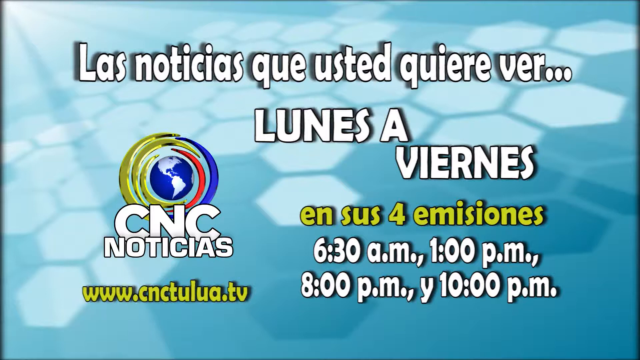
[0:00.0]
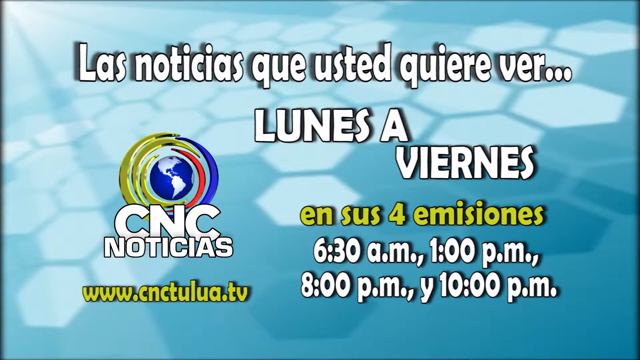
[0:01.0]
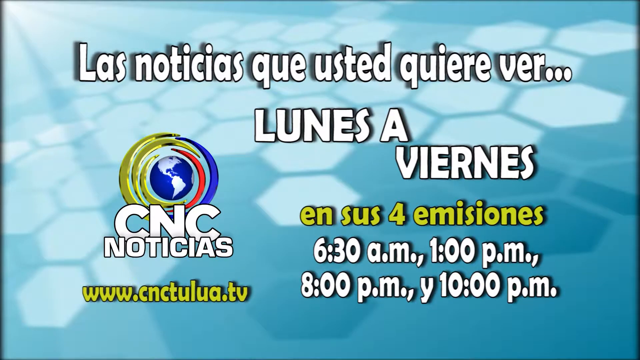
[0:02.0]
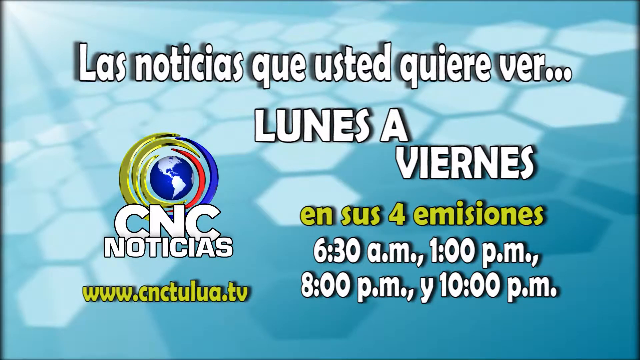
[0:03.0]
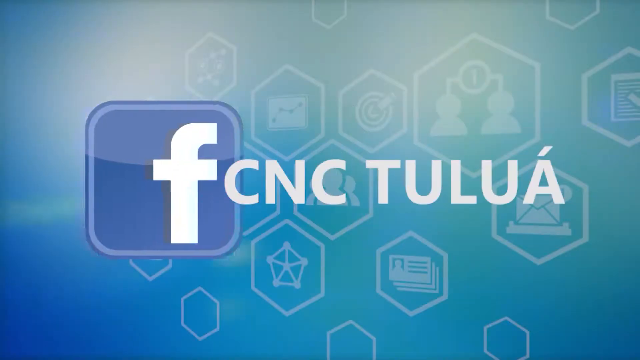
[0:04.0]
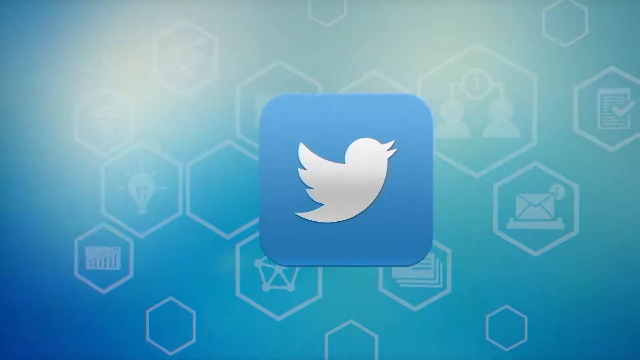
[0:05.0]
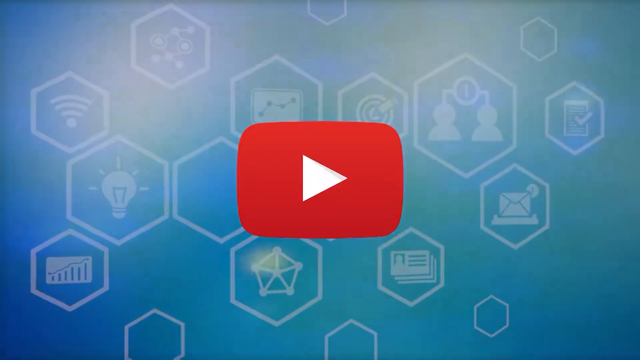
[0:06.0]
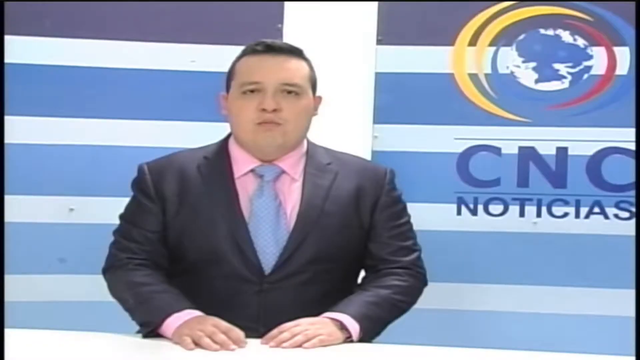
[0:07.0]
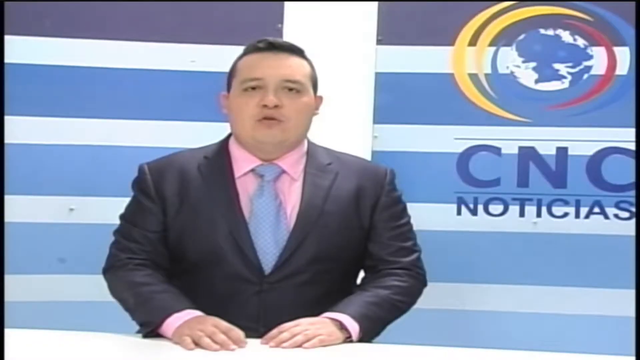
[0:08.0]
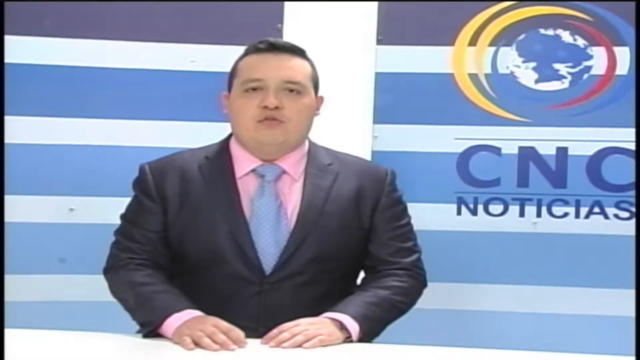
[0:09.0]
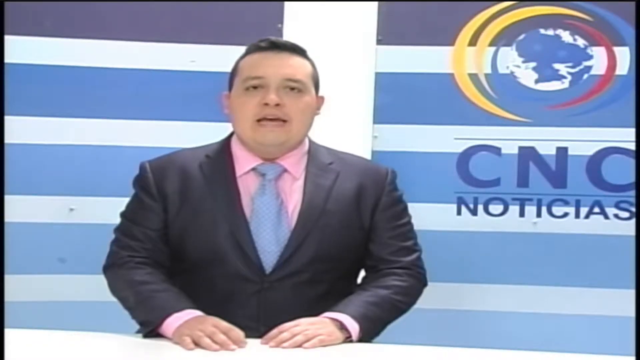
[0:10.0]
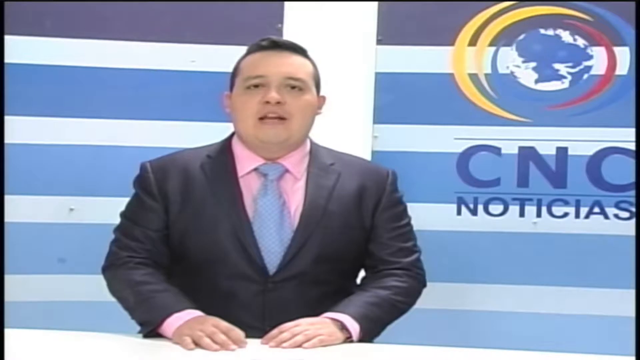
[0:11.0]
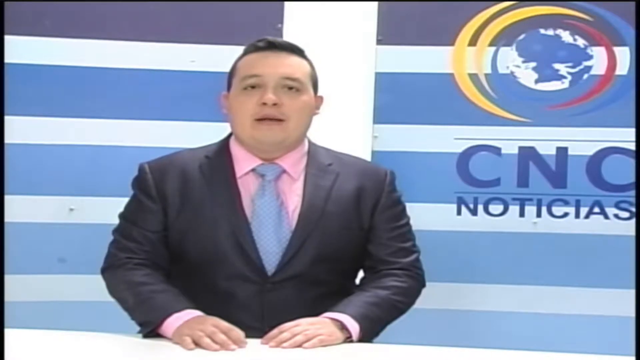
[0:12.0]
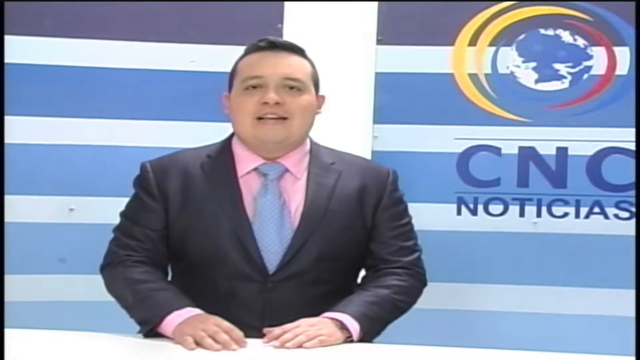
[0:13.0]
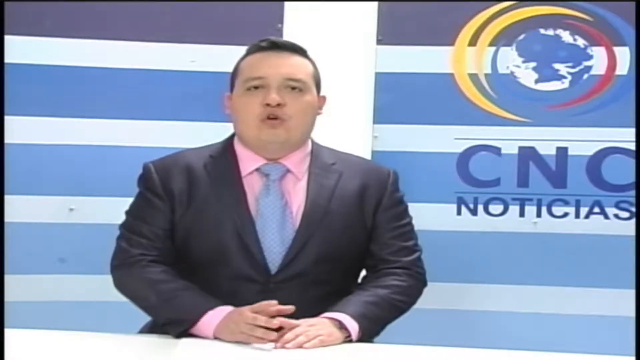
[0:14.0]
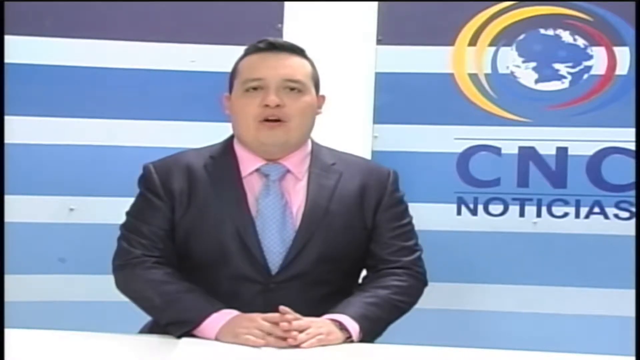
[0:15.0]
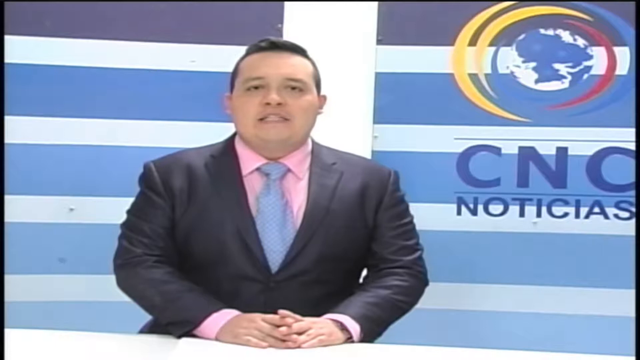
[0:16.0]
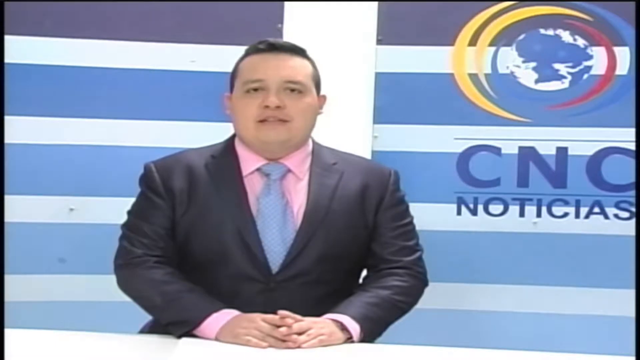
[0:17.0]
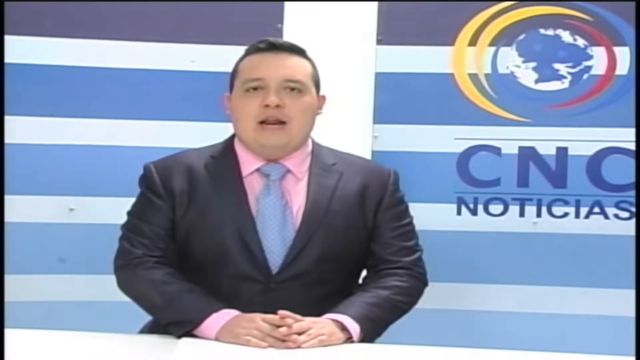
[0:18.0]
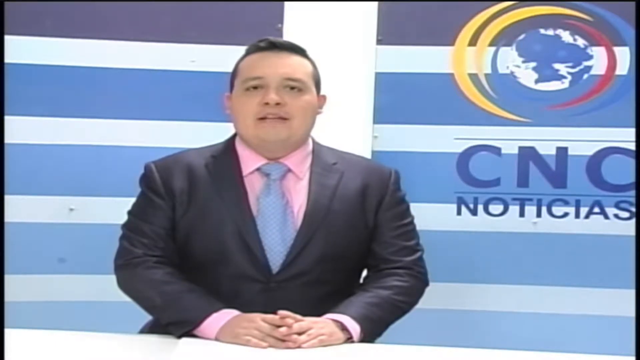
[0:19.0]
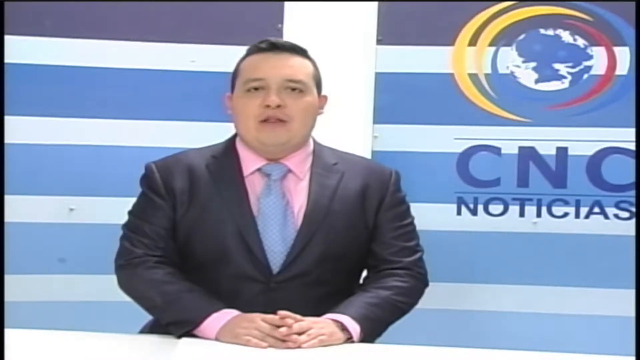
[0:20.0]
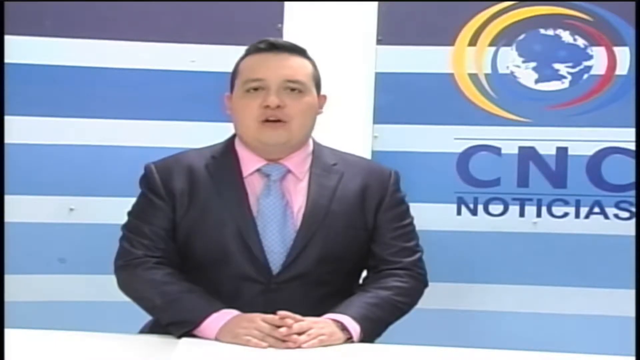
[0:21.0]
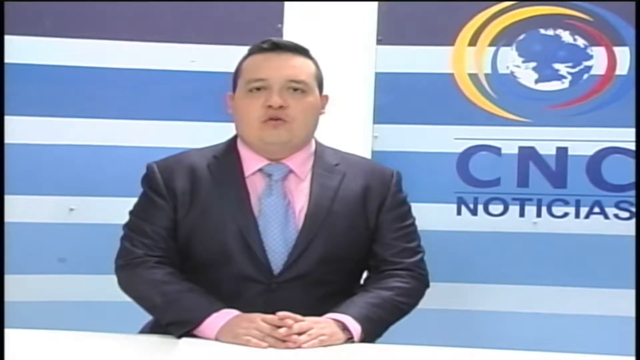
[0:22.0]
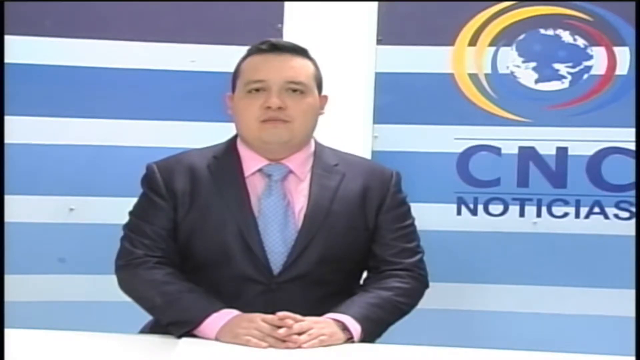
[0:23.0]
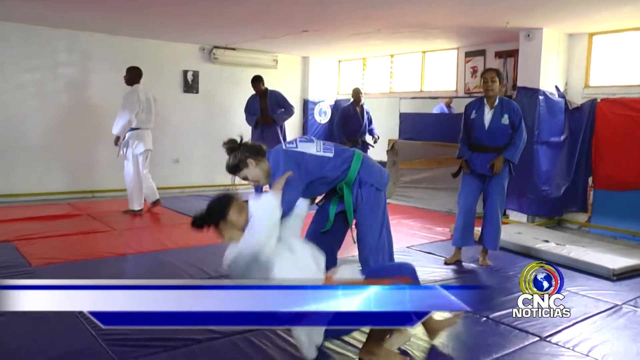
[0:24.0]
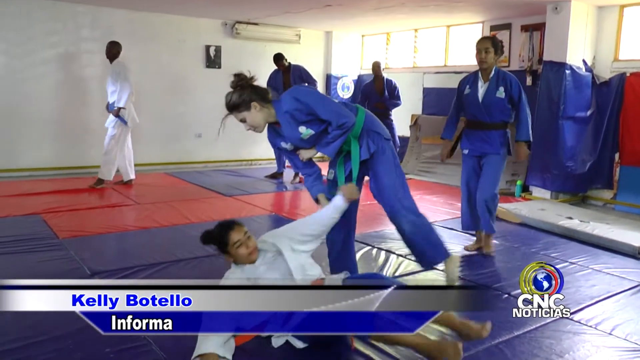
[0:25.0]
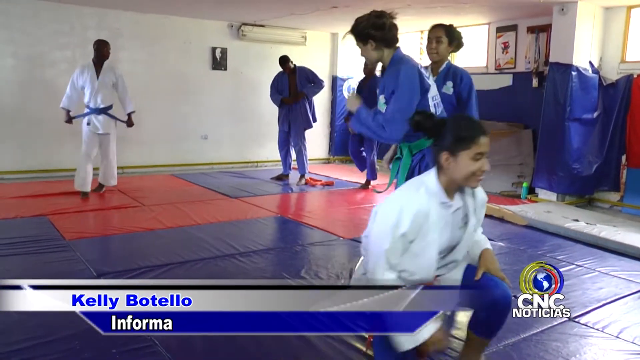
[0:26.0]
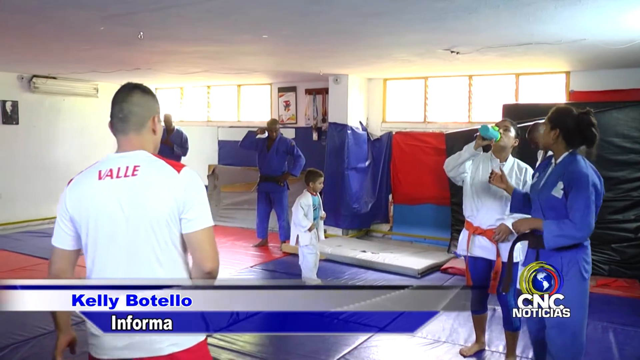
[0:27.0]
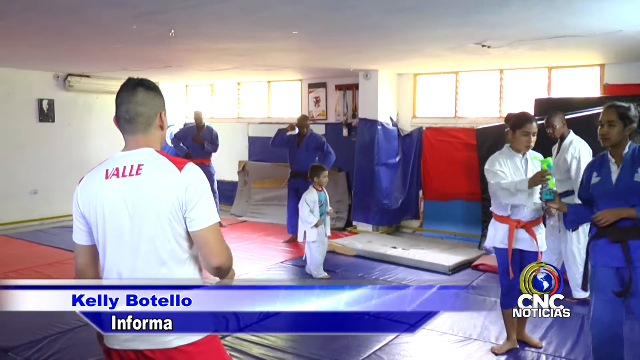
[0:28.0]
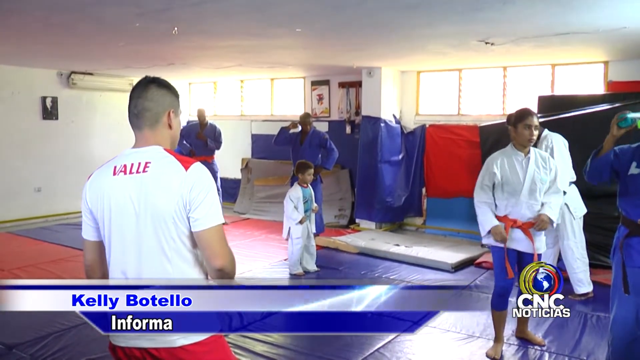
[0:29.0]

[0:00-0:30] A still graphic has a blue and white honeycomb-design background; most of the honeycomb cells are white, while mainly those on the left and right are blue. A CNC Noticias news channel logo is on the left, and a lot of Spanish writing appears at the top, bottom and middle of the screen, including the times 6.30 AM to 1 PM and 8.30 PM to 10 PM. Different social media logos then pop up on a new blue background with some honeycomb shapes: a Facebook logo with CNC Tulua, a Twitter logo and a YouTube logo. Next, a news anchor appears against a background of blue and white lines, with the CNC channel logo at the very top, in the middle of the screen. He wears what looks like a gray jacket with a pink shirt underneath and a blue tie; he has short, dark hair and is slightly above average weight. He starts speaking into the camera and brings his hands together on what looks like a white desk in front of him. The video then shows footage from a martial arts gym. Some participants wear white judo, karate or some other martial arts outfits, and four others wear blue outfits, all with different belts tied around their waists. The one in focus, a woman with a green belt, is training with another woman. The young woman in the blue outfit with the green belt trips her opponent and drags her to the floor; the one on the ground wears a white suit and an orange belt. She stands up and they hug. In a new setting within the same gym, a younger child is also in the frame; there are seven people, four in white outfits and three in blue. A person on the far right of the screen drinks from a bottle.